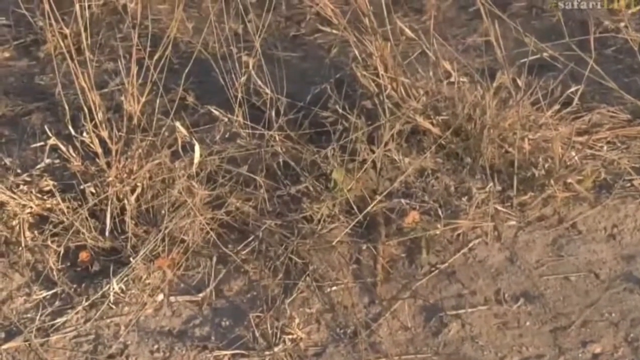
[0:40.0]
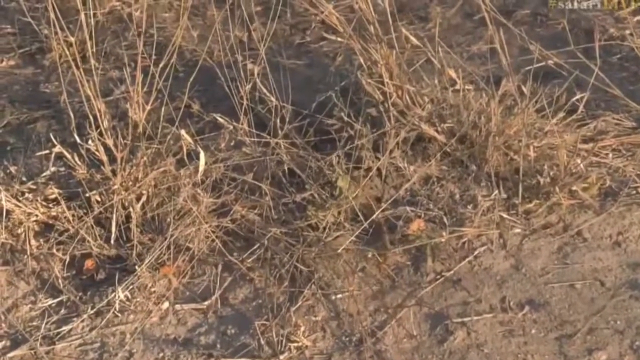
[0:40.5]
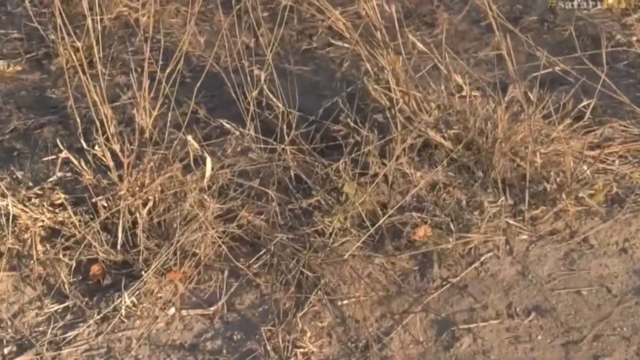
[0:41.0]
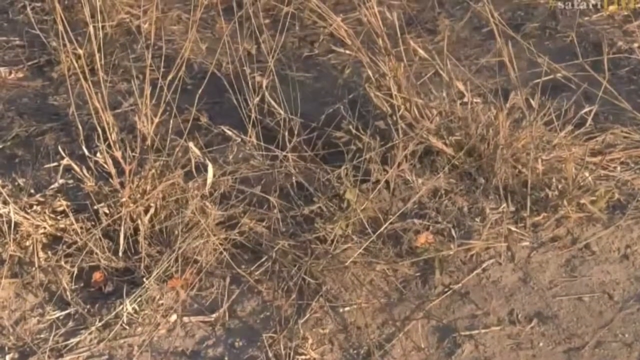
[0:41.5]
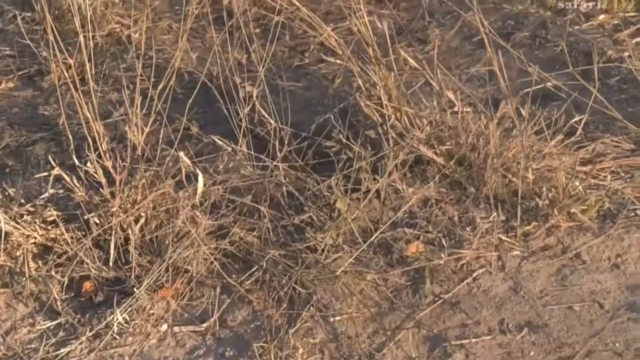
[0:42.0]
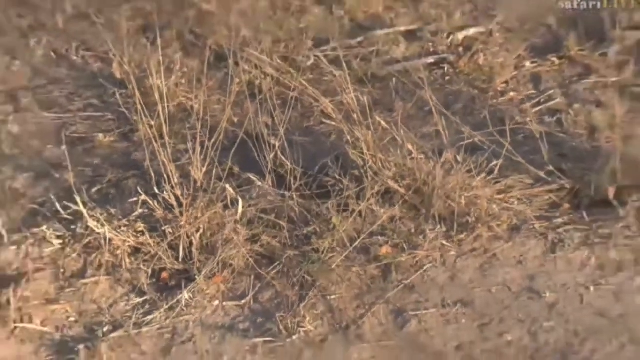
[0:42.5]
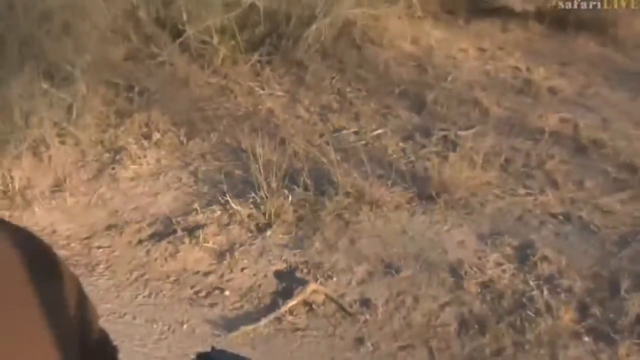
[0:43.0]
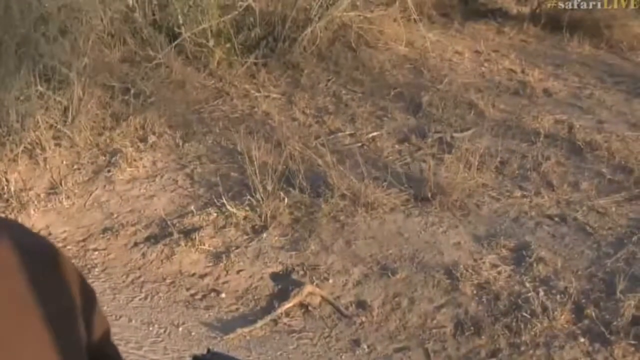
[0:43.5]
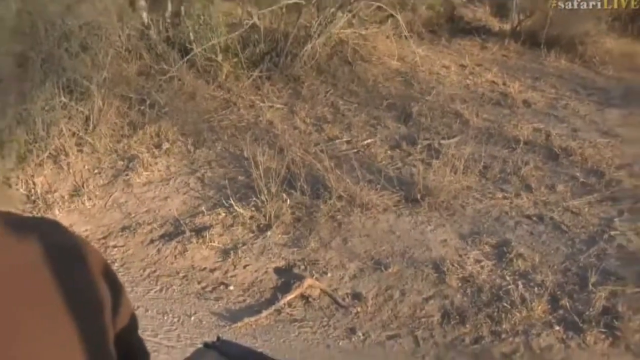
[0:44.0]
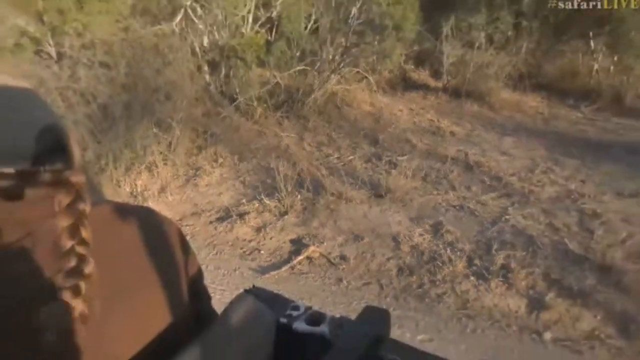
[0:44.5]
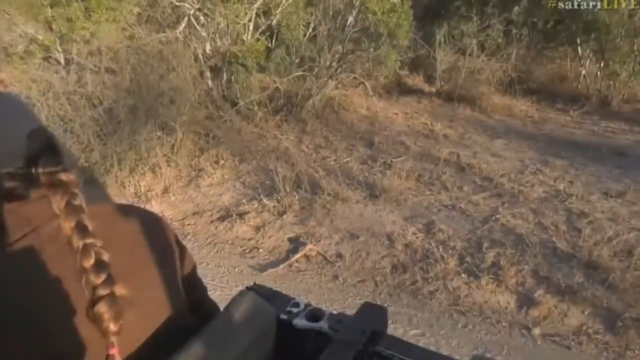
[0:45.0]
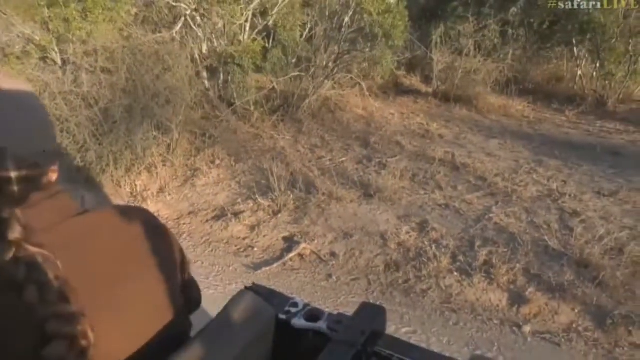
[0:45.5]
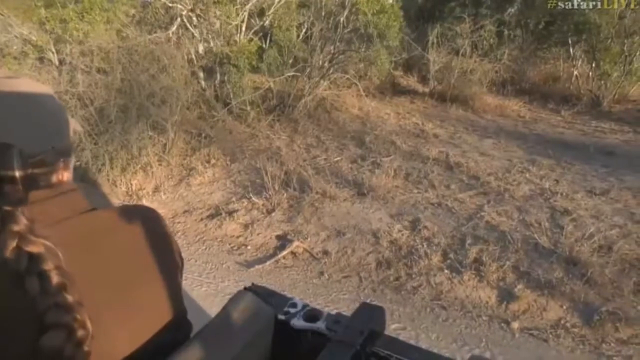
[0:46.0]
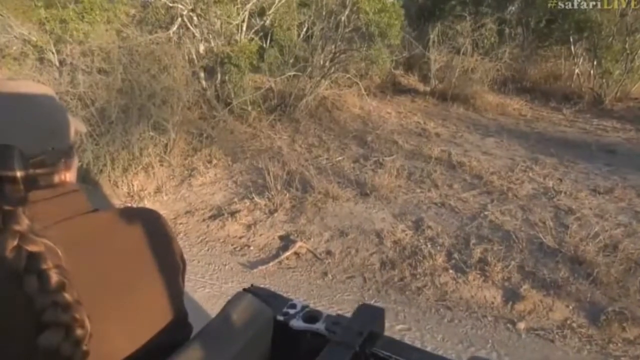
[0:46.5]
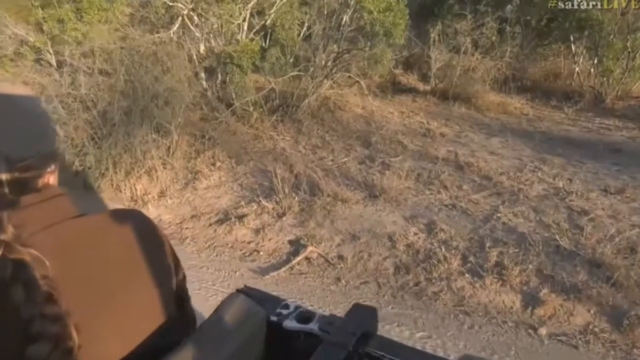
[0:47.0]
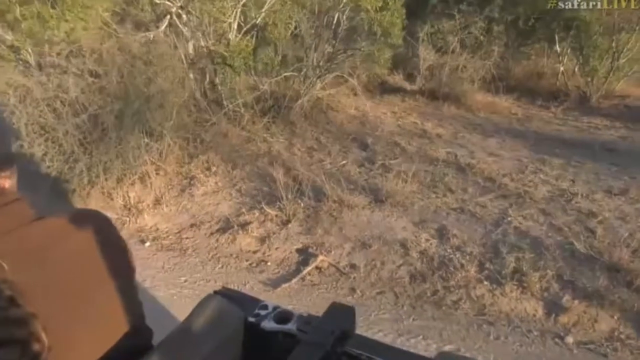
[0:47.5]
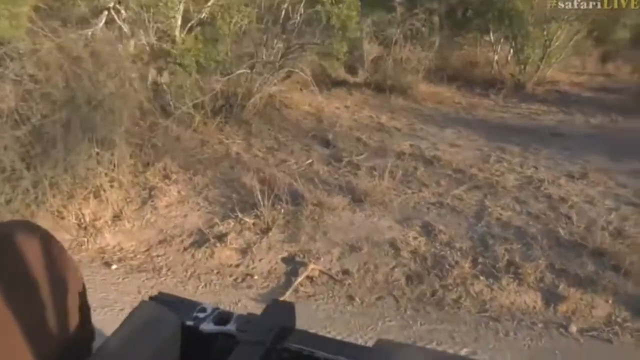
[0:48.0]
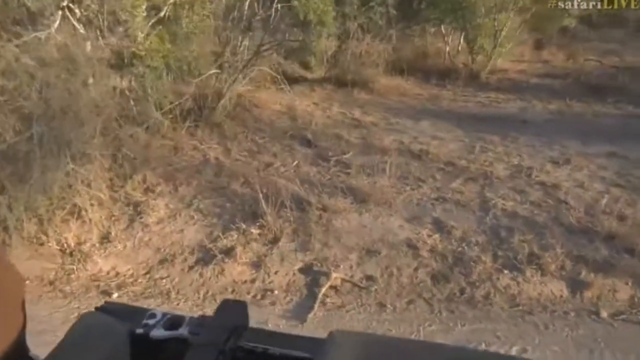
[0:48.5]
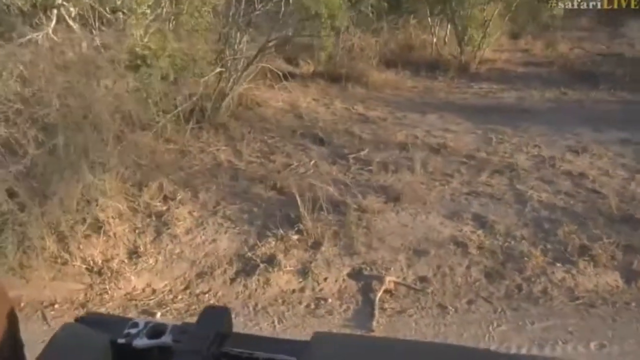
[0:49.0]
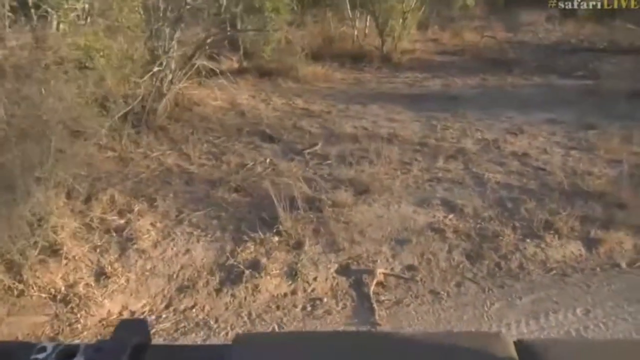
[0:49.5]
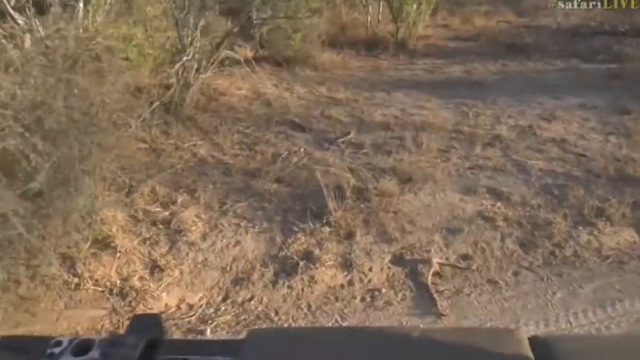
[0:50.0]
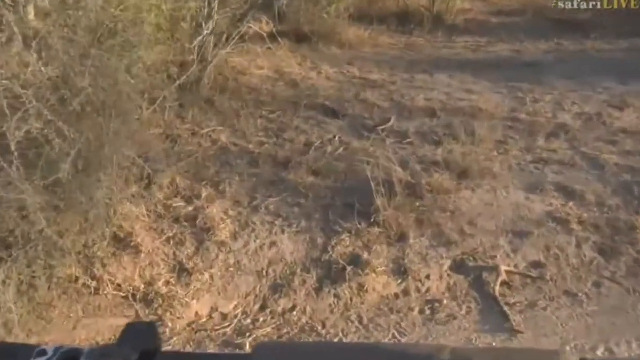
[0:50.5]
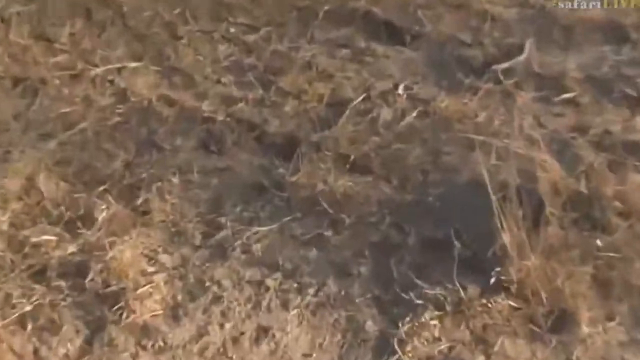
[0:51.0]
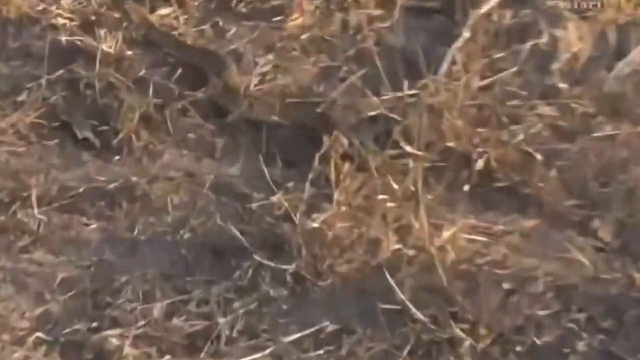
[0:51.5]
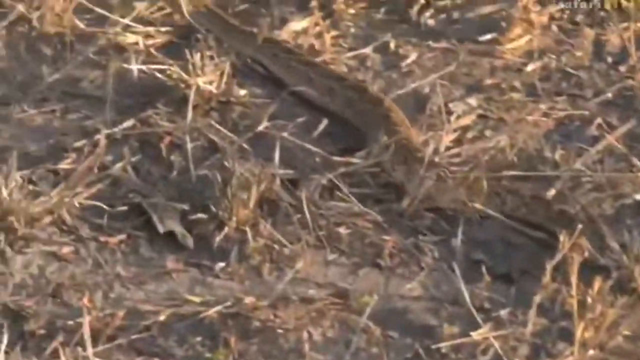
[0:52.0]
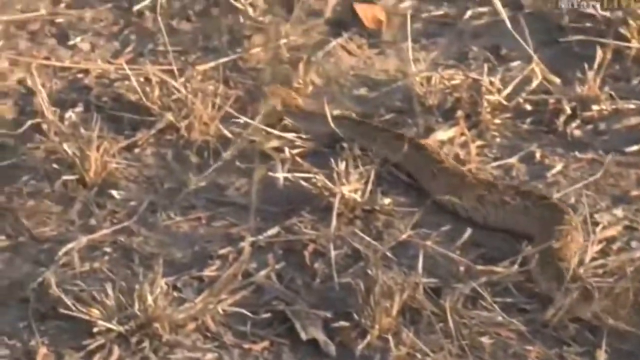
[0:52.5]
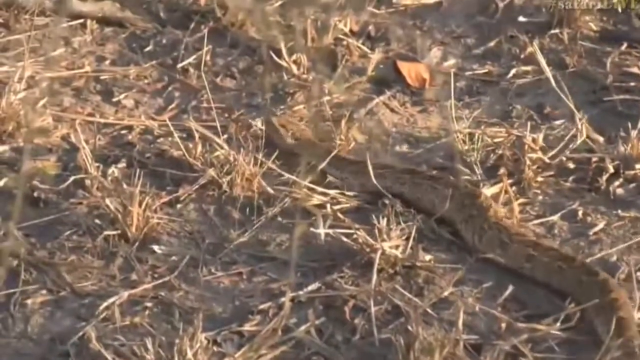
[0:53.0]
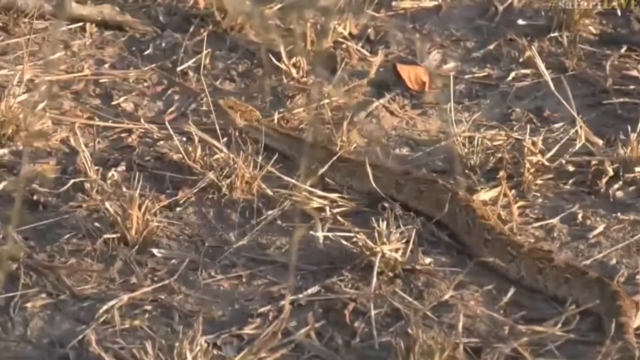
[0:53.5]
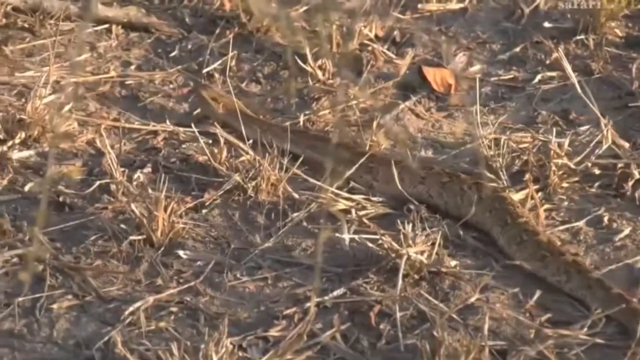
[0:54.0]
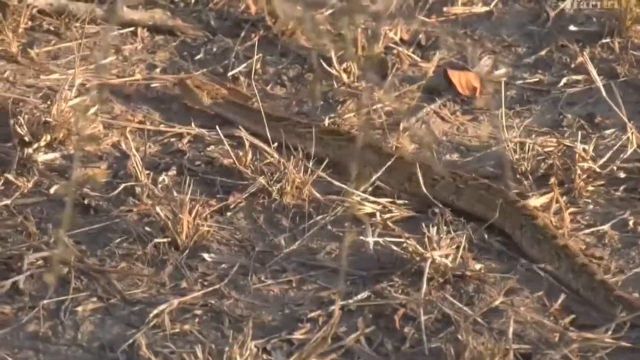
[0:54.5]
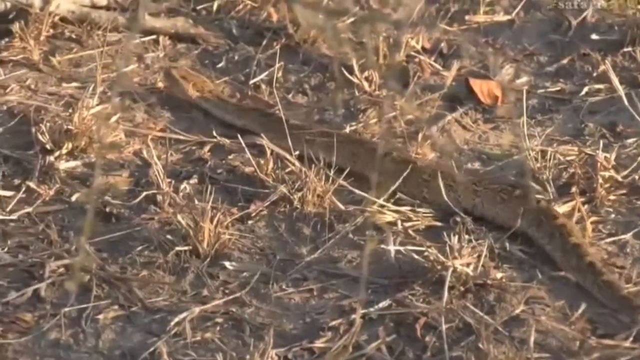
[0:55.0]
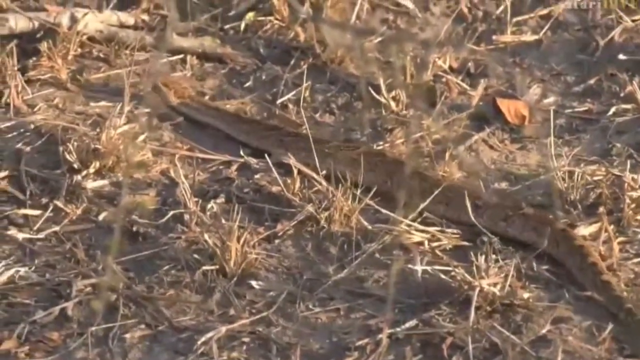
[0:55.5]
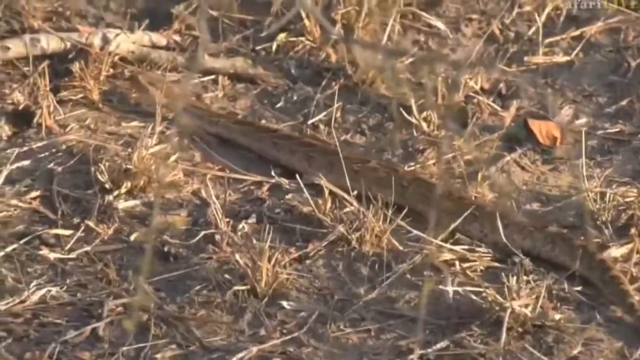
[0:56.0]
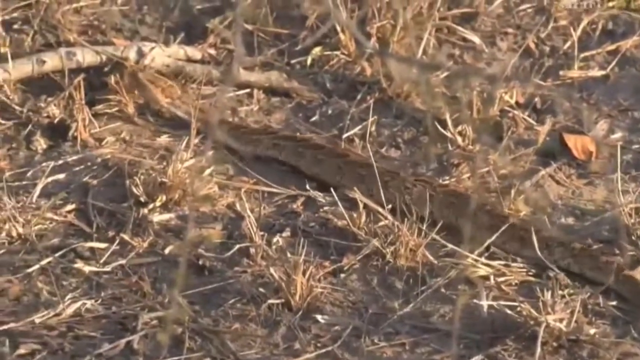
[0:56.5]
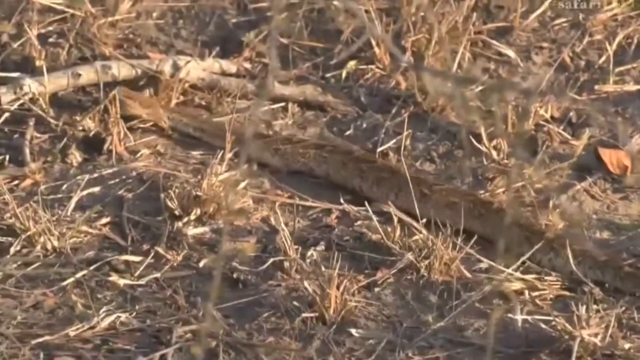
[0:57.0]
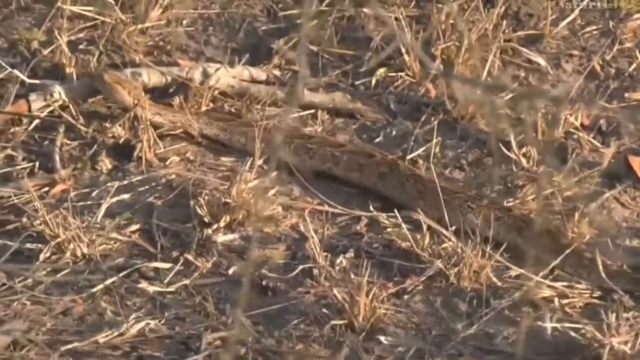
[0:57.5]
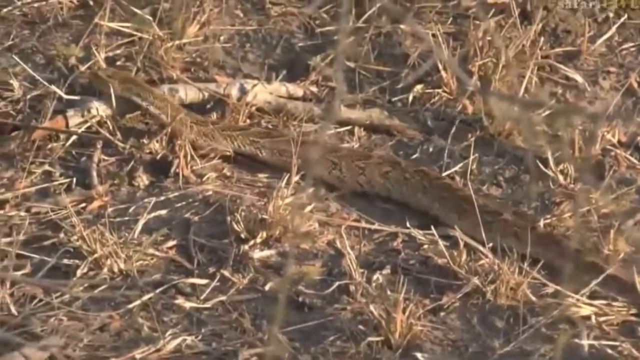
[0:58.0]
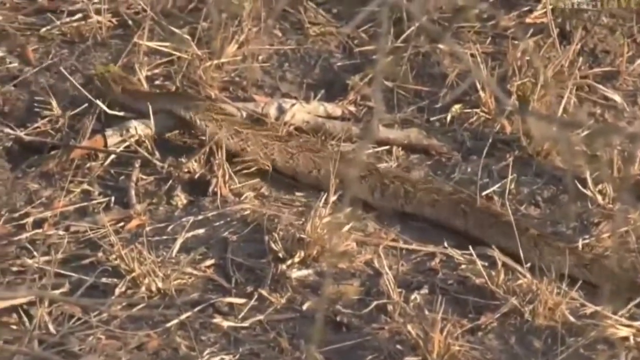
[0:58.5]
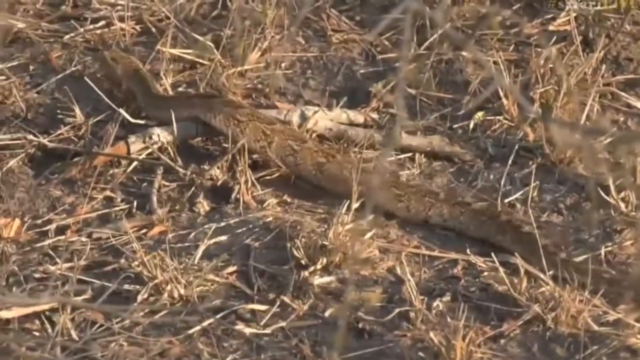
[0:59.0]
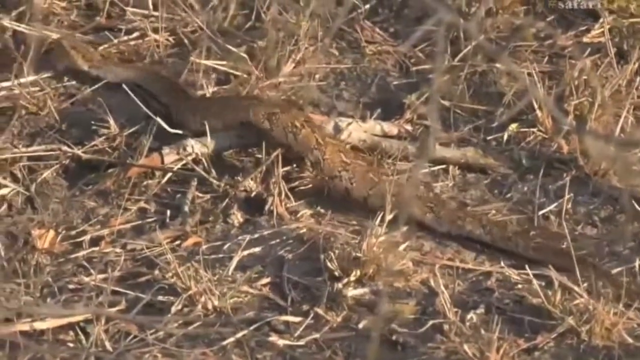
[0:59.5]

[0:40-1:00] The camera is focused on the very tip of the snake's tail as it disappears into what looks like a hole, and then the camera starts to zoom out. The view returns to the back of the woman's head as she continues to look at the ground. She starts to move as if about to drive again: she fidgets a little in her seat, reaches around, and eventually presses the accelerator, and the Jeep starts to move. The snake seems to have gone, but as the Jeep moves the camera zooms back in and the snake, very well camouflaged because it is the same colour as the ground, starts to slither again through the very short brushy grass and across the earth. It has a pattern with slightly darker brown colours on the top of its body, matching its surroundings perfectly and making it very hard to see. The camera tracks the snake as it slithers away over some branches and through some grass, passing through the frame.